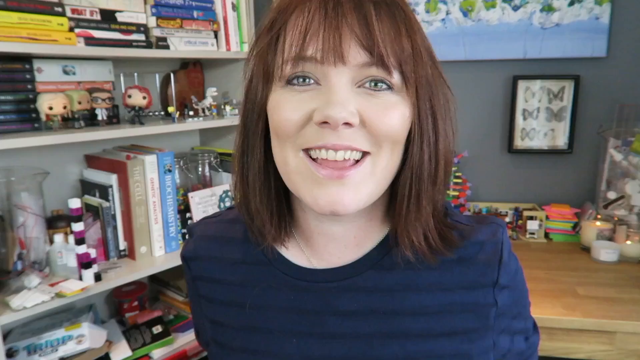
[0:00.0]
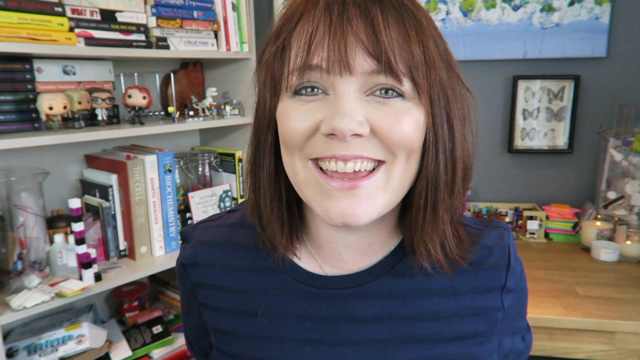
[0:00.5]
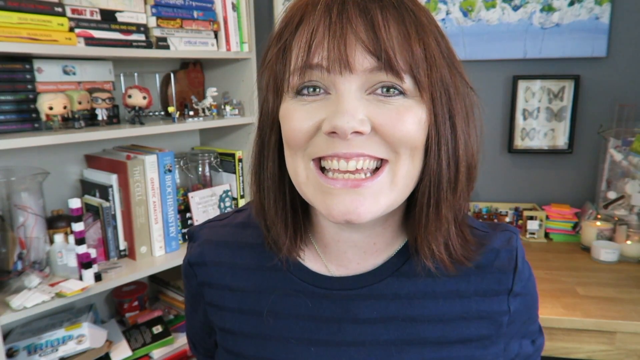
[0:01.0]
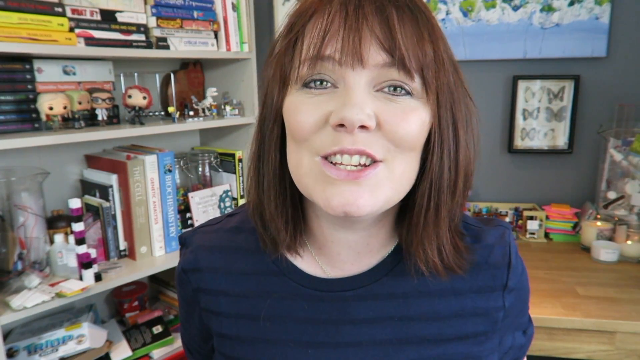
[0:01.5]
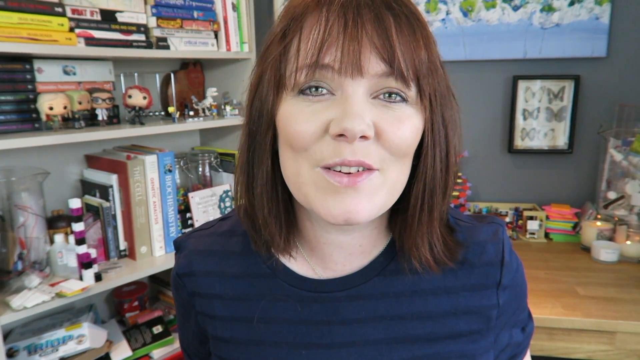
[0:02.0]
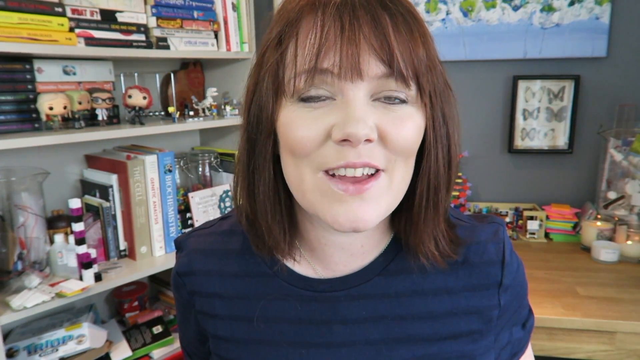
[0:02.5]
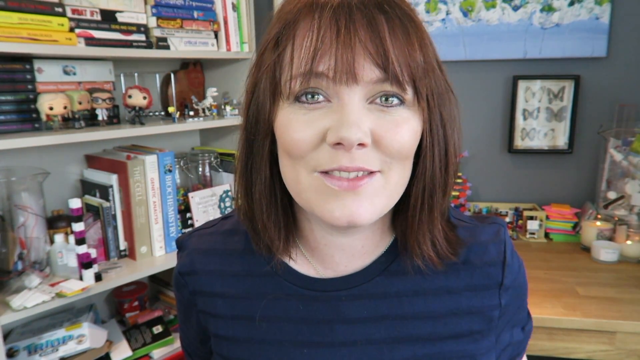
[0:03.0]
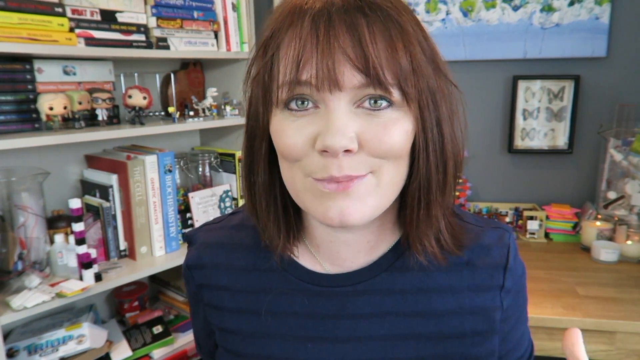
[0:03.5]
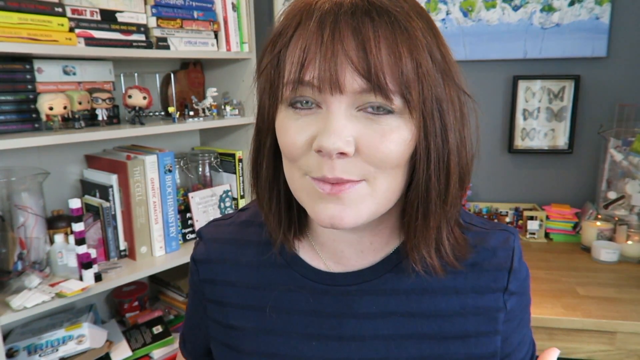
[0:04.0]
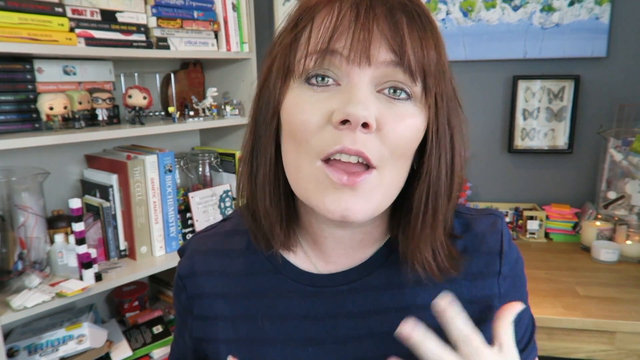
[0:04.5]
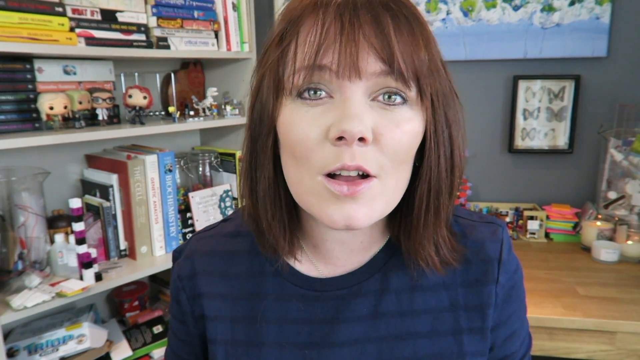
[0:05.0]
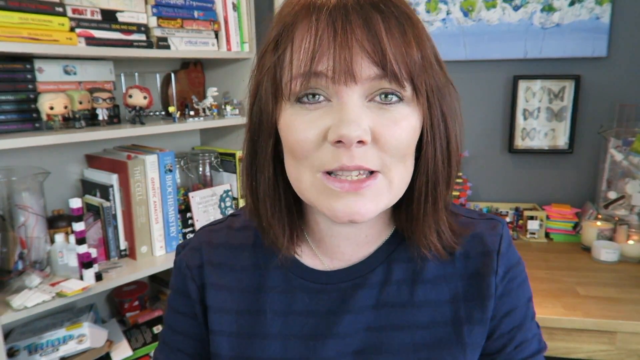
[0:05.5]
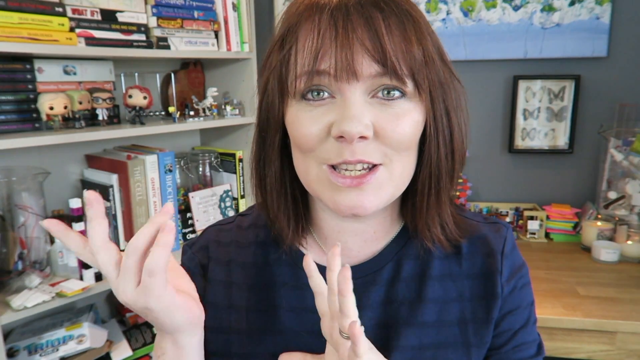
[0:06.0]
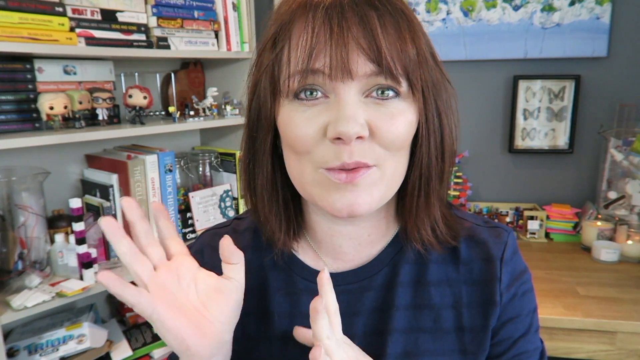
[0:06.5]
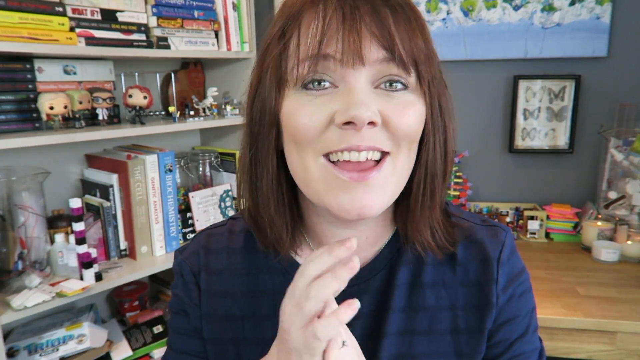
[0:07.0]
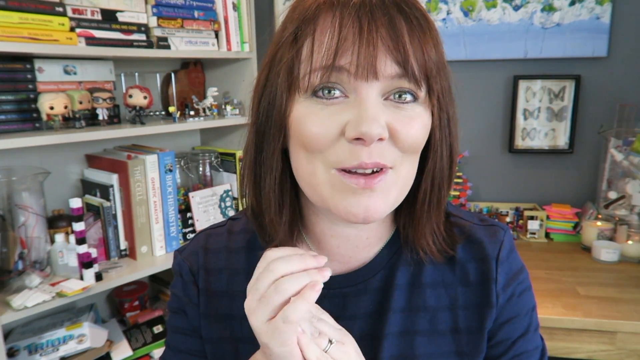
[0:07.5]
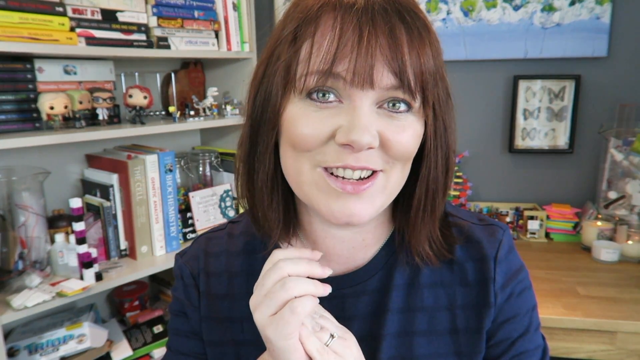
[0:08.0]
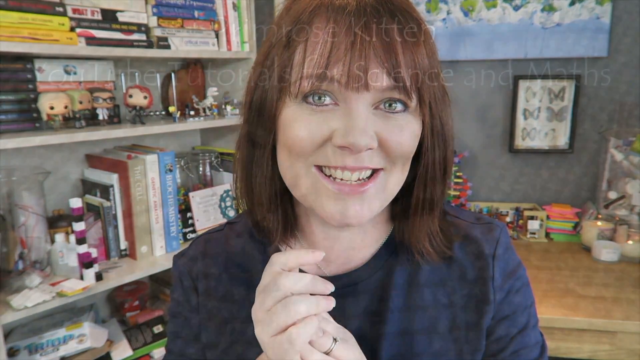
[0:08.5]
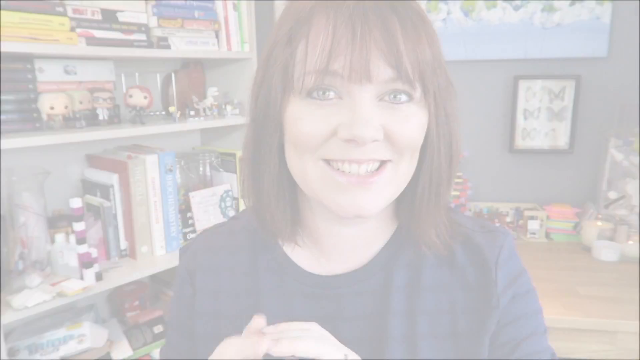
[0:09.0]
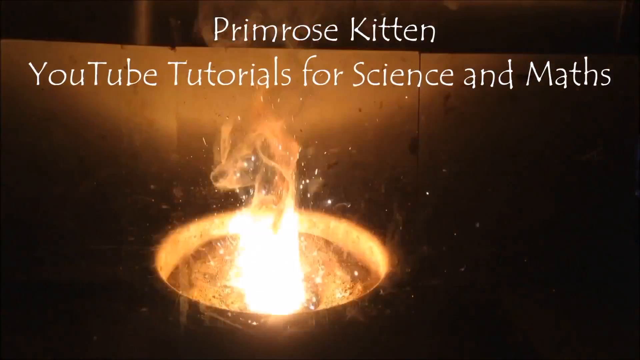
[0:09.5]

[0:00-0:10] A white woman with short brown hair and bangs, wearing a navy blue round-neck t-shirt, talks happily to the camera. She has almond-shaped blue eyes and a smiling face, her mouth slightly open as she speaks, revealing white teeth. She gestures with both hands and makes slight head movements. Behind her is a shelf holding several books, dolls and other items, along with a painting of a butterfly, and the floor appears to be wooden. The screen then transitions to a title reading "Primrose Kitten YouTube Tutorial for Science and Maths" over a brown background with a small fire-like light glowing, and a gray kitten appears just before the cut.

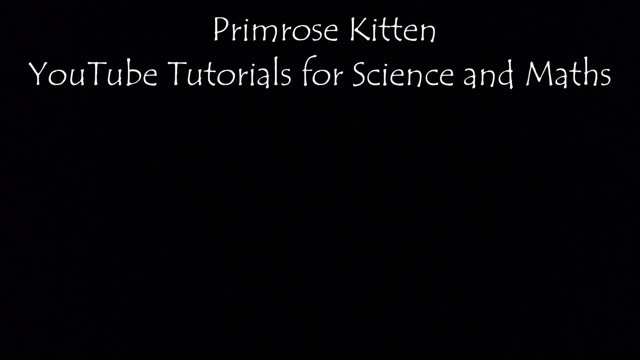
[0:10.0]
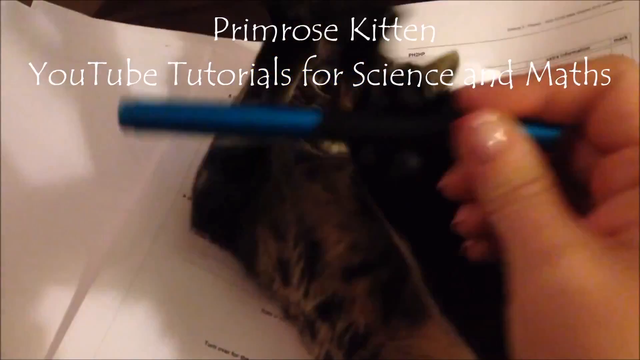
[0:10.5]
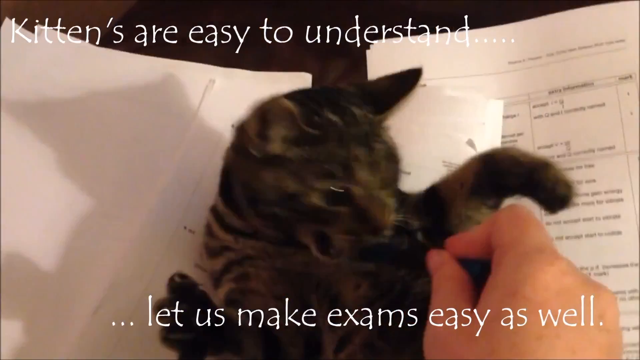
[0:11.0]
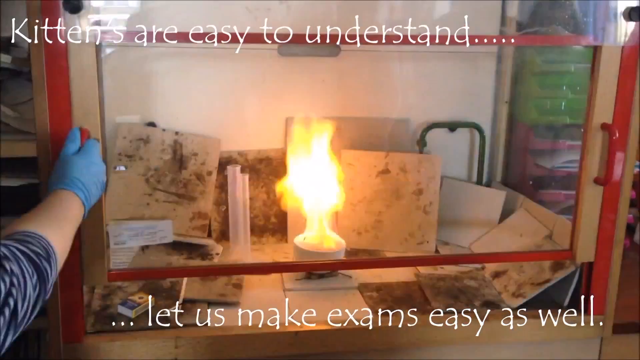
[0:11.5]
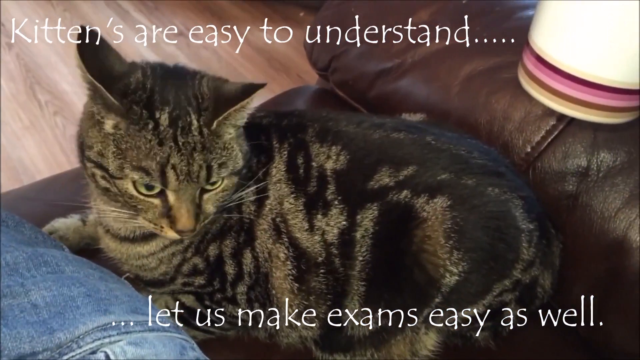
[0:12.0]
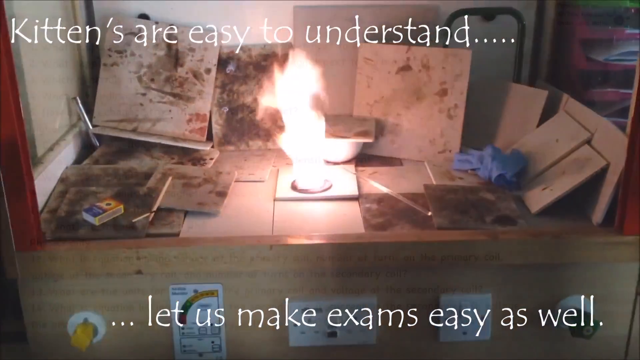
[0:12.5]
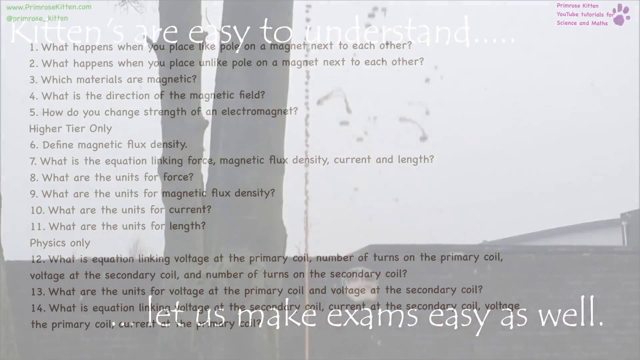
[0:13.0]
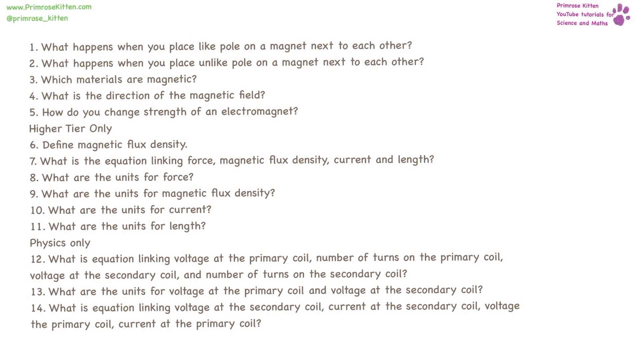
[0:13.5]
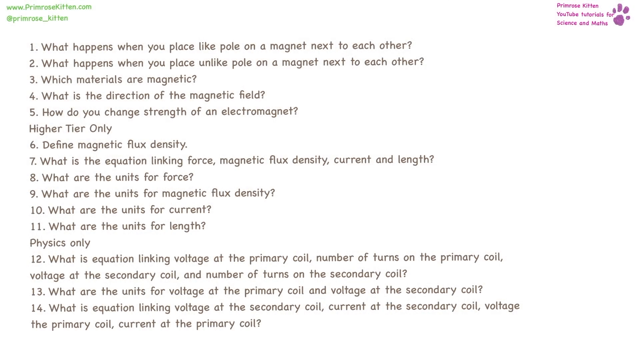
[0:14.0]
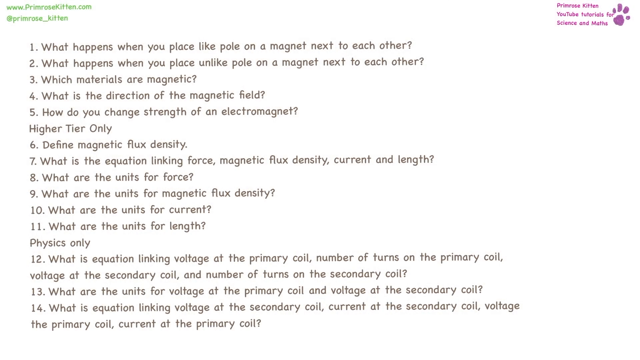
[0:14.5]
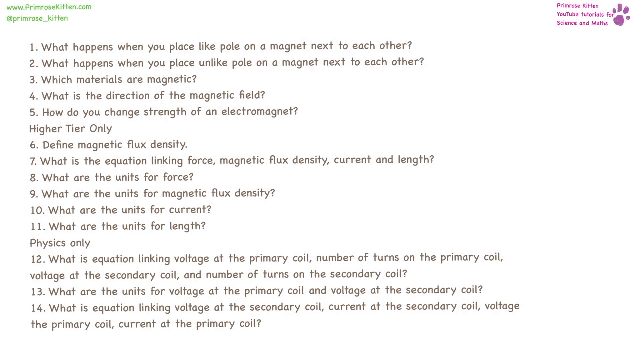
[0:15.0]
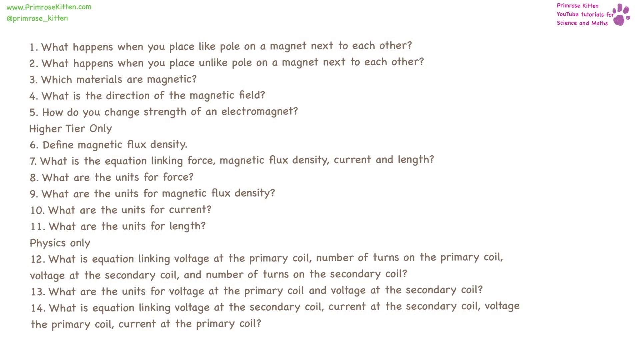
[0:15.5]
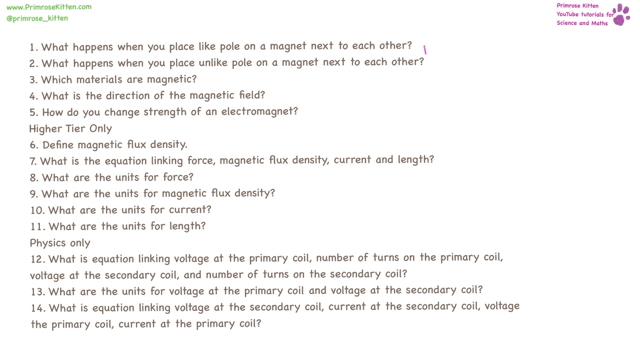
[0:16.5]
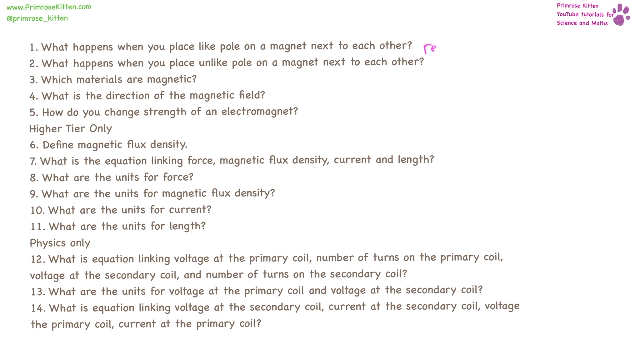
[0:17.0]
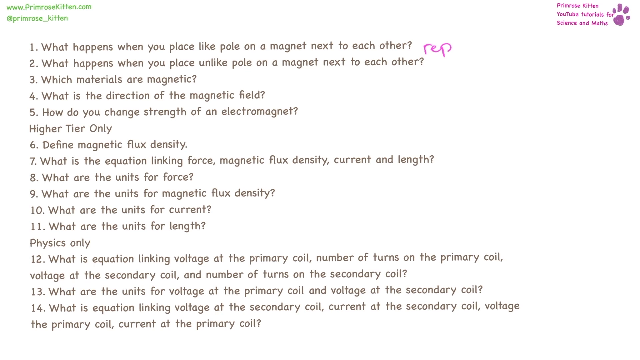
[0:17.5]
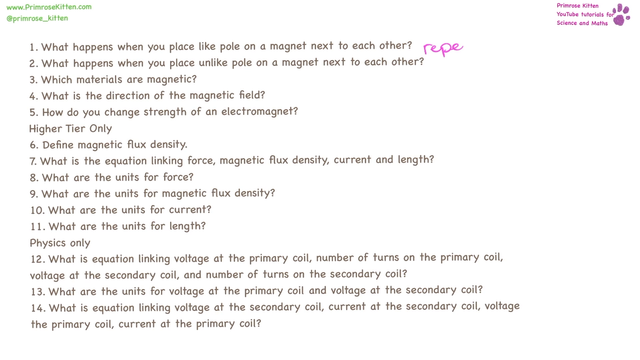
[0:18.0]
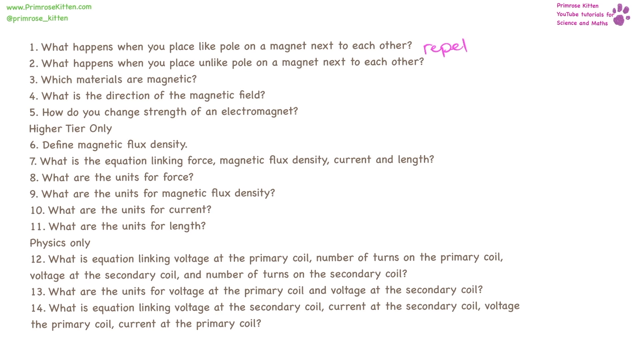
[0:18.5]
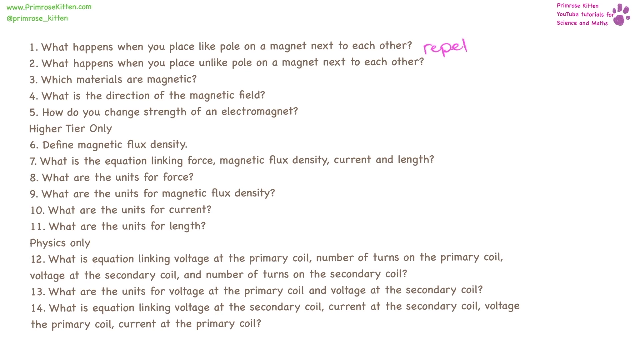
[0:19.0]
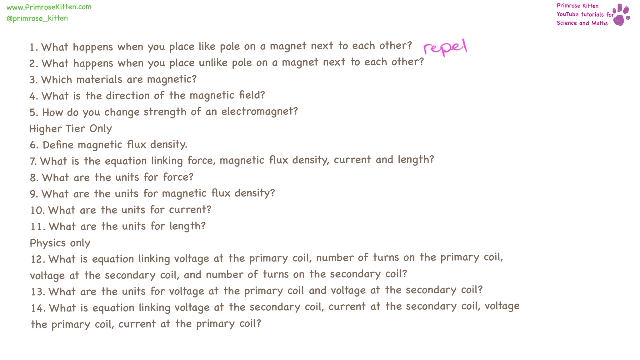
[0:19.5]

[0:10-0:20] A screen shows "primrose kitten youtube tutorials for science and math" written in white at the top, over an animated background. A black screen with a blue highlighted chemical tube appears, followed by a gray kitten lying on papers and playing with a pencil on all fours. A new screen reads "Kittens are easy to understand" at the top and "let us make exams easy as well" below, over a background of a glass-like box with debris inside and a fire burning from a bowl at its center. The scene transitions to the kitten again, now sitting comfortably on a sofa, and then the box with the fire at its center appears again; these animations transition quickly. The screen then changes to a white background with about 14 questions about magnets, with the channel logo in the top right corner. The word "repel" is written in thin red strokes between the first and second questions.